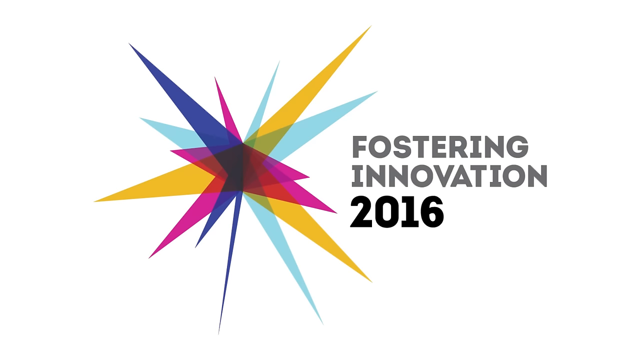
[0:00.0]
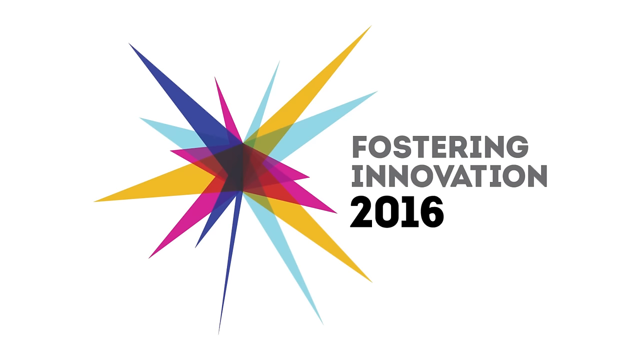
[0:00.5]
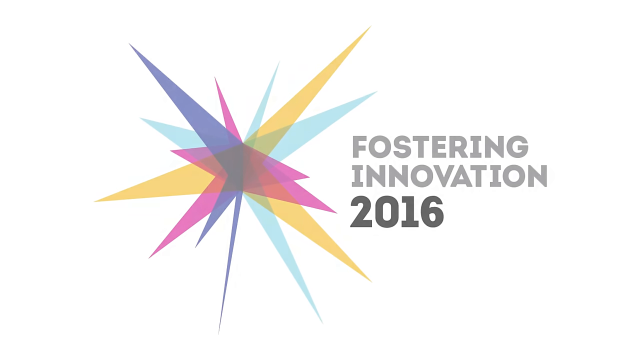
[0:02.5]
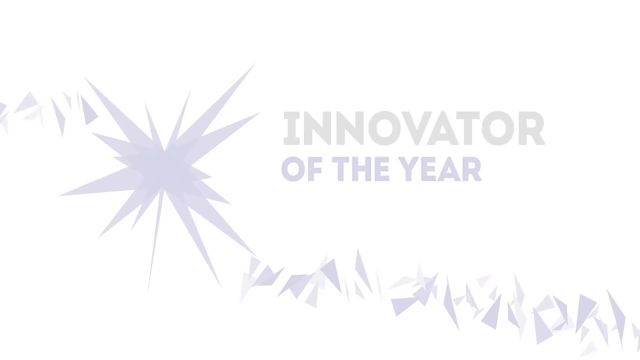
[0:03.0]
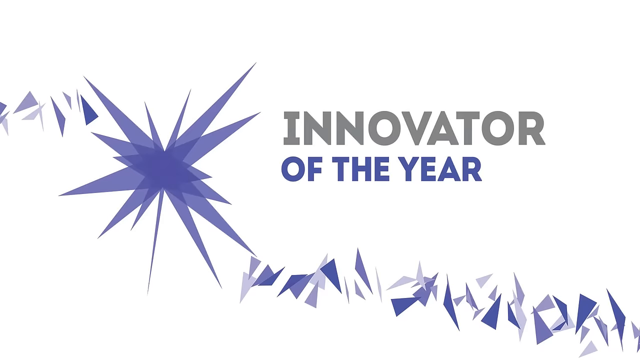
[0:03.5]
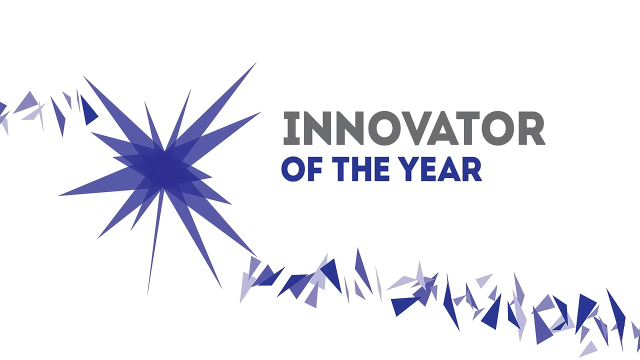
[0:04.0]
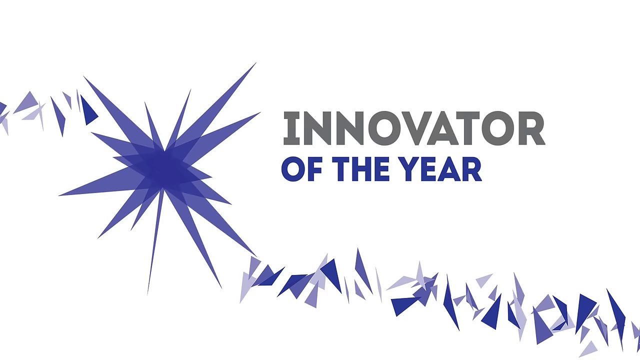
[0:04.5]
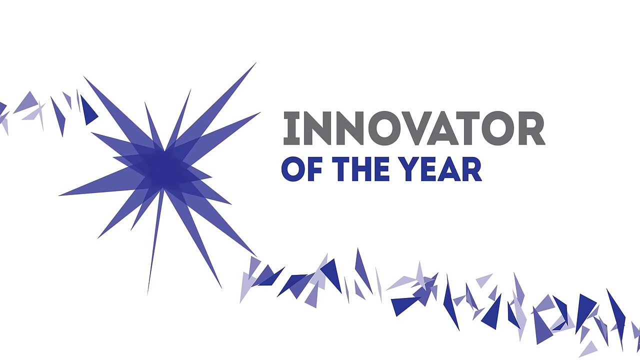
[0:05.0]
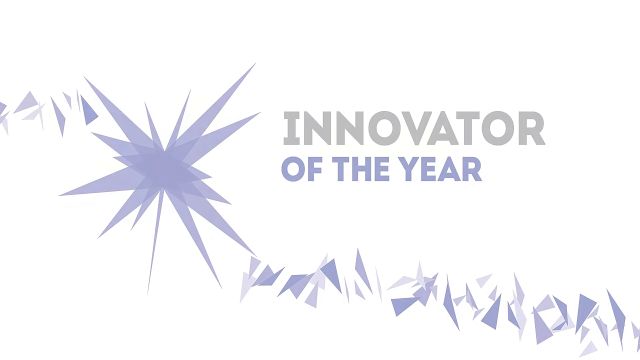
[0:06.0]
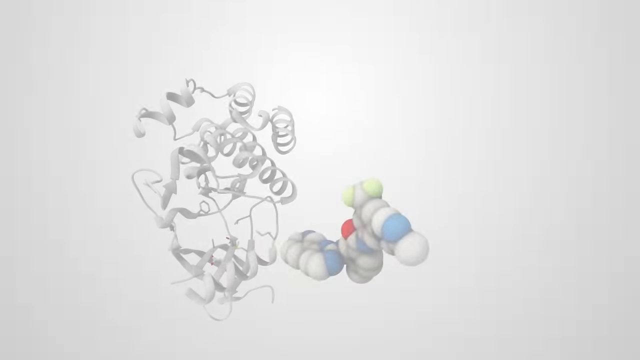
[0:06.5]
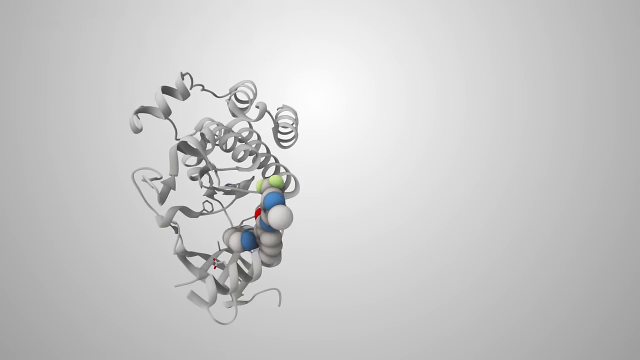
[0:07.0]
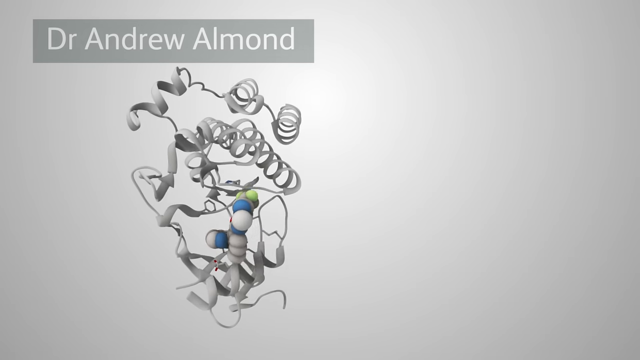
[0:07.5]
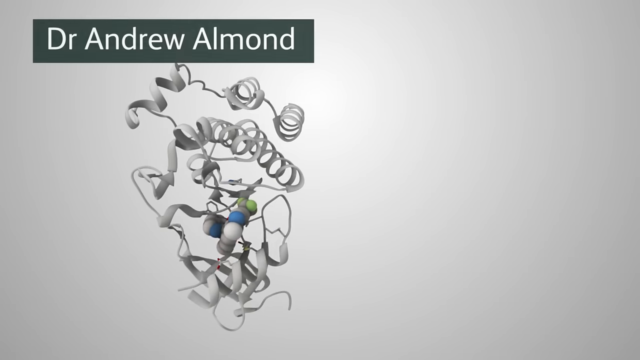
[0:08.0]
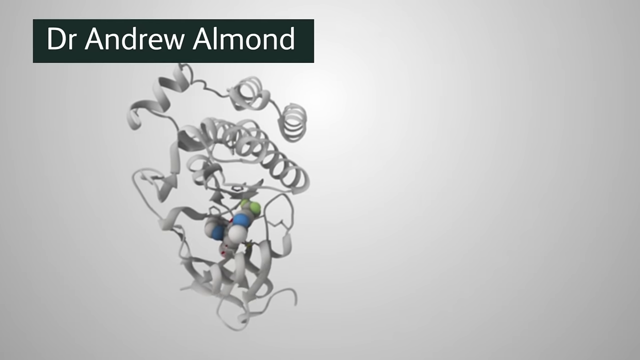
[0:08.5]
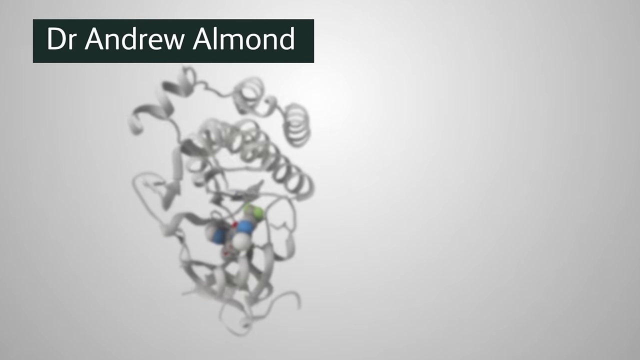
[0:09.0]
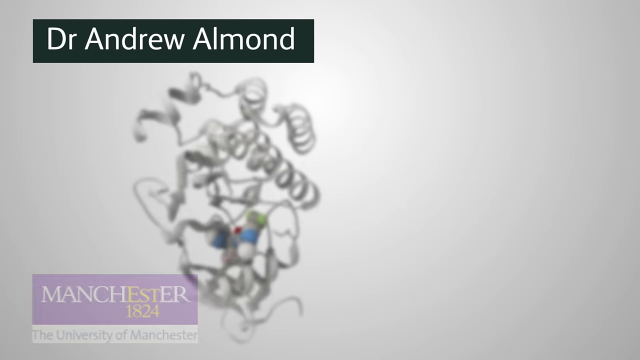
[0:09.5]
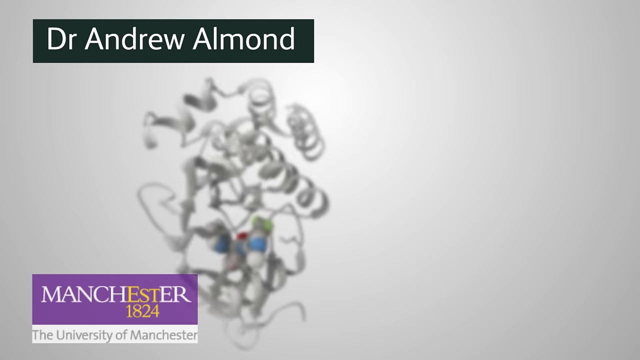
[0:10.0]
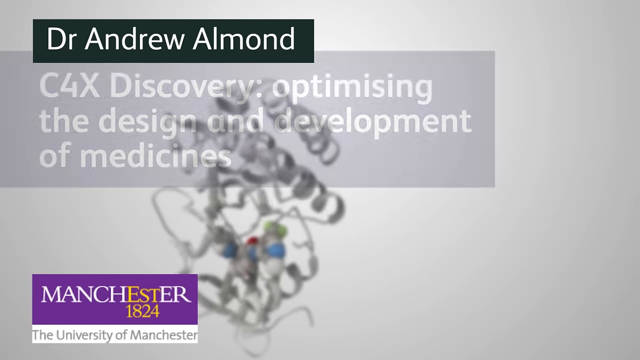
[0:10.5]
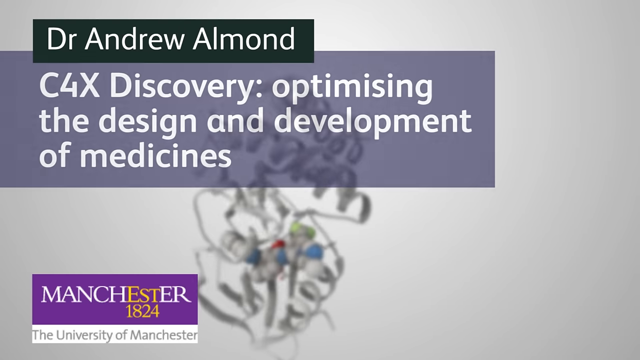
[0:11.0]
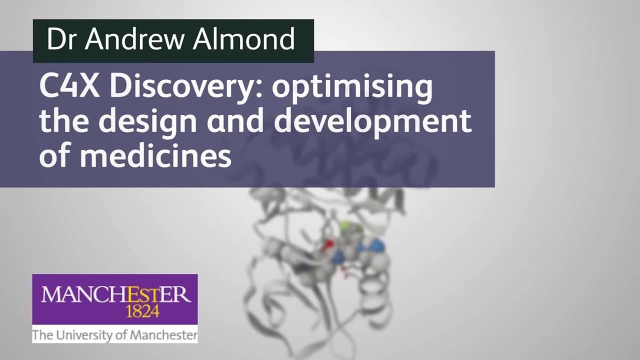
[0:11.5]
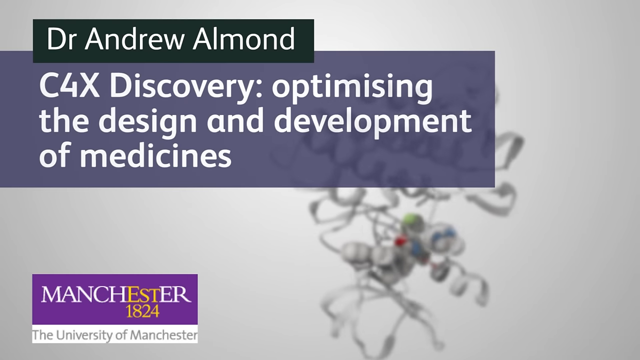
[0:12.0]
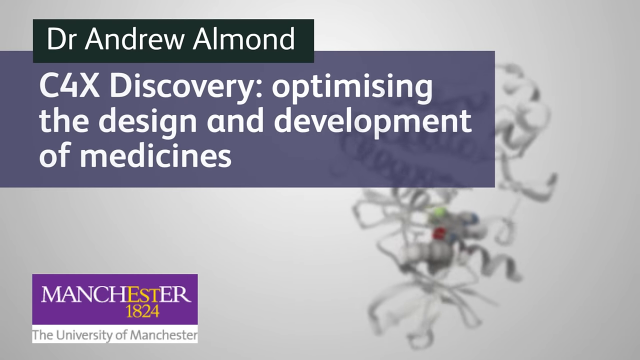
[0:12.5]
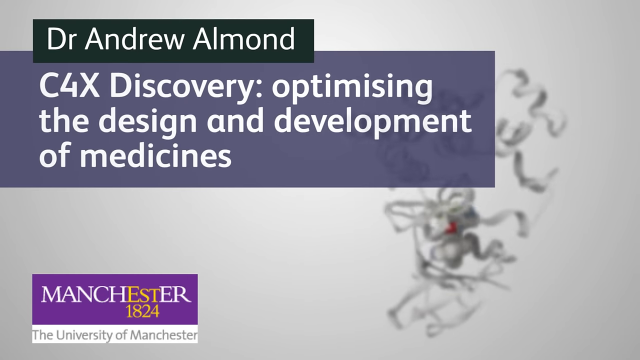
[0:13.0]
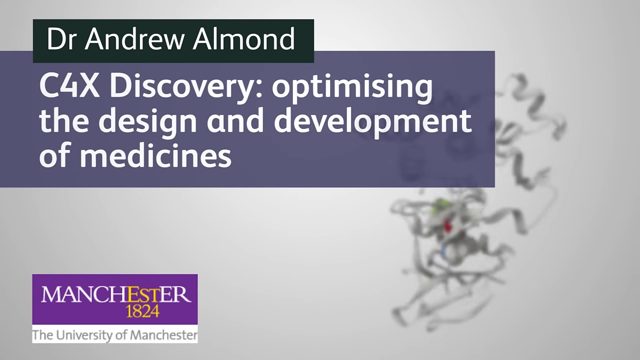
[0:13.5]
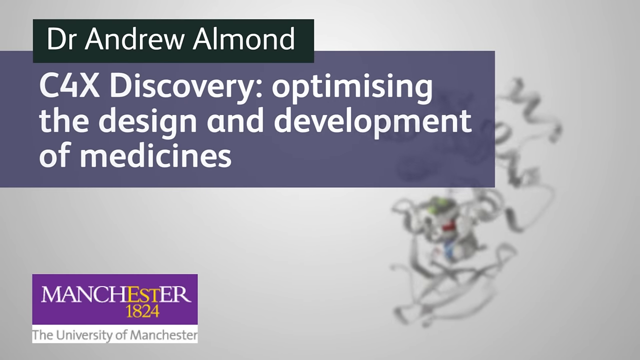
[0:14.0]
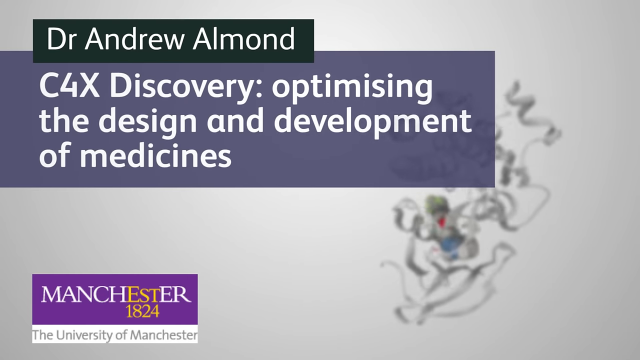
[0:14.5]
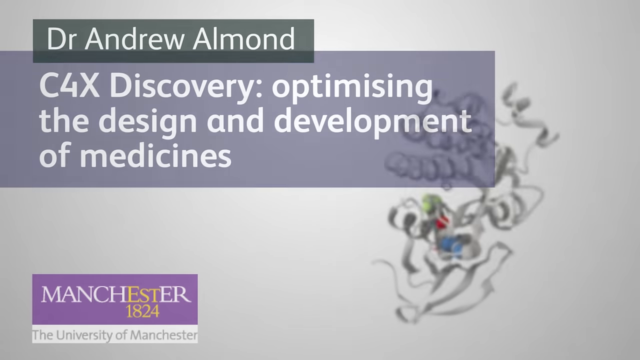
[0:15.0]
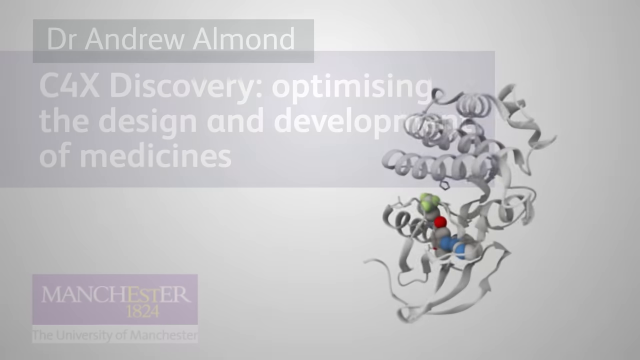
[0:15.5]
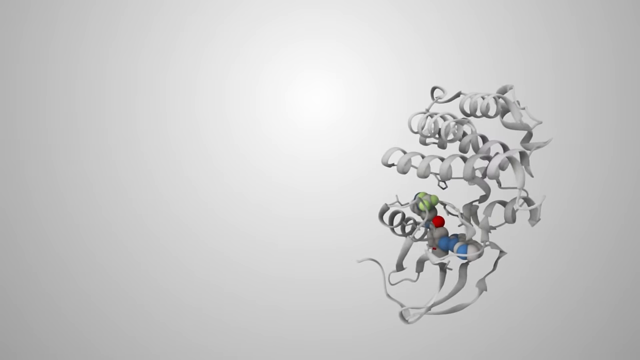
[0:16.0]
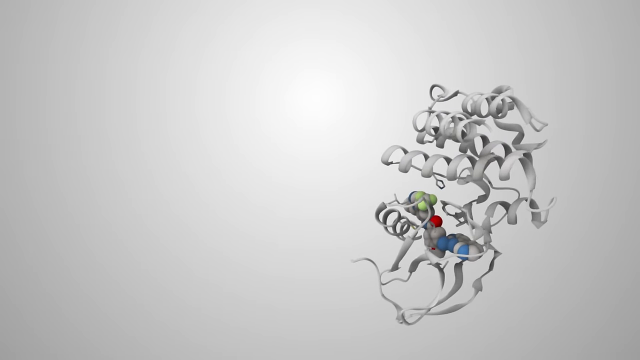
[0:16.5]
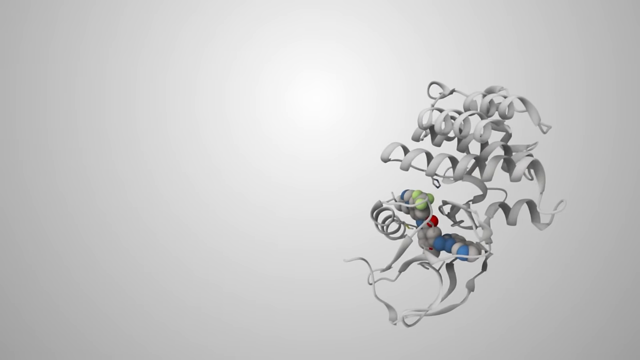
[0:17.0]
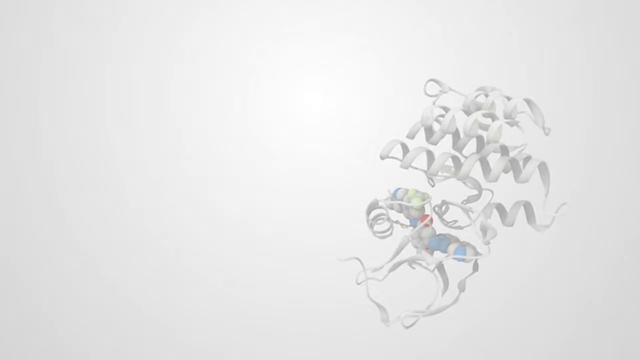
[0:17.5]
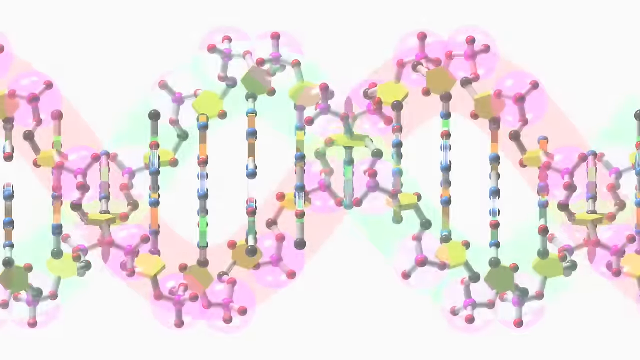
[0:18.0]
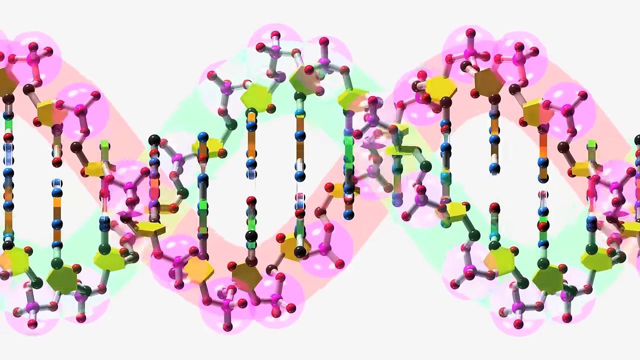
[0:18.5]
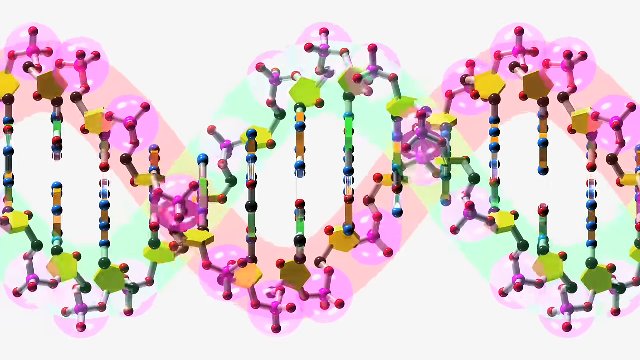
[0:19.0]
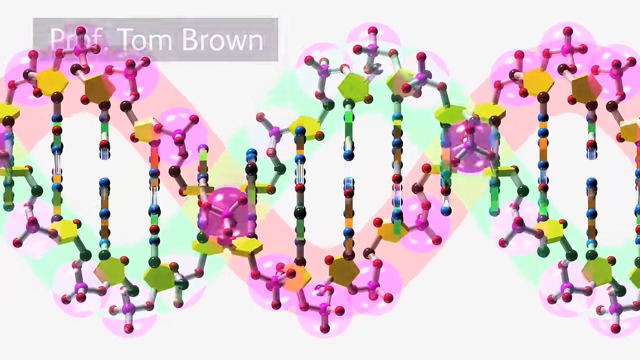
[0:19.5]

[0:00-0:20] The video opens on a white background with something that sort of looks like a star in light blue, blue, pink and yellow. The yellow part sort of looks like a three-pointed star, and the colors apparently each have different numbers of points; together they make more than five points. There are fourteen, maybe fifteen points to the right of that. Text in black letters reads "fostering innovation 2016", with "2016" in bold black letters. Another screen follows with the same star pattern in blue and light purple, and to the right of it the text "innovator of the year", with "innovator" in black letters and "of the year" in blue letters. Next, things that look like little springs move around, and something that looks like pills moves from the middle of the screen to these stringy spring-like things. At the top, a dark green banner reads "Dr. Andrew Allman" in white letters. At the bottom, text reads "Manchester 1824", with "EST" and "1824" in yellow. Another banner appears below the green banner reading "C4X Discovery, optimizing the design and development of medicines". The squiggly line things move to the right, and then what looks like DNA appears: a vertical double helix in all different colors. Another banner appears at the top left of the screen.